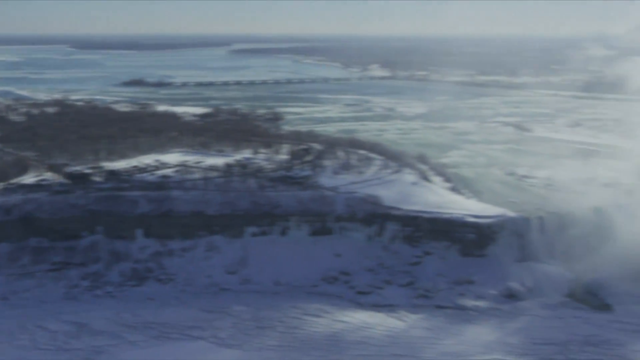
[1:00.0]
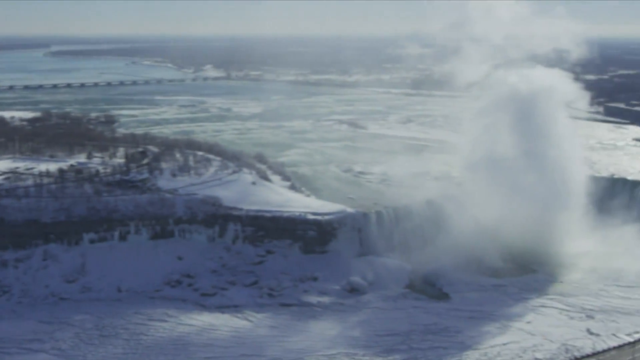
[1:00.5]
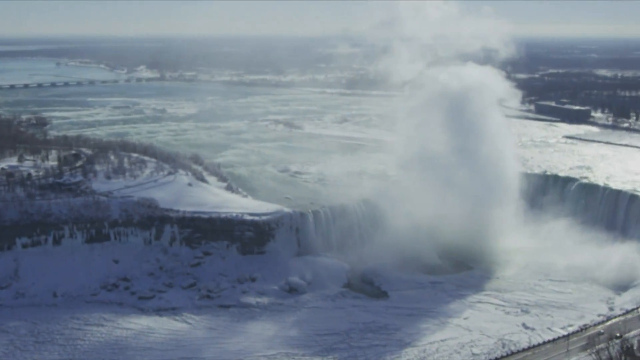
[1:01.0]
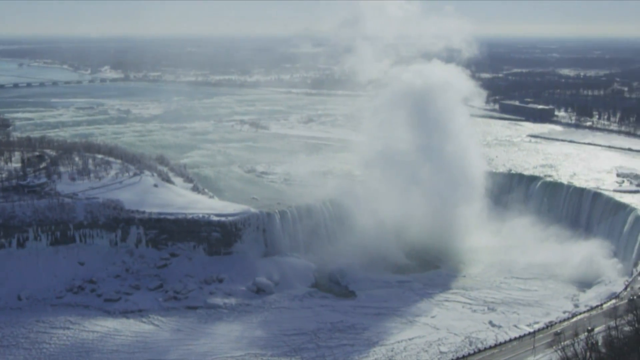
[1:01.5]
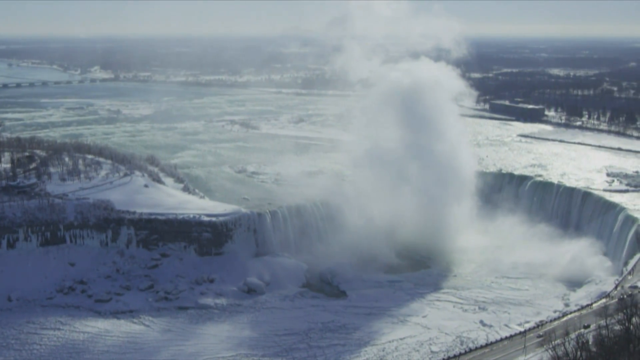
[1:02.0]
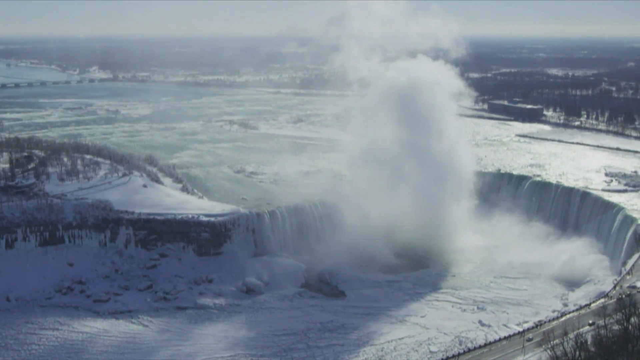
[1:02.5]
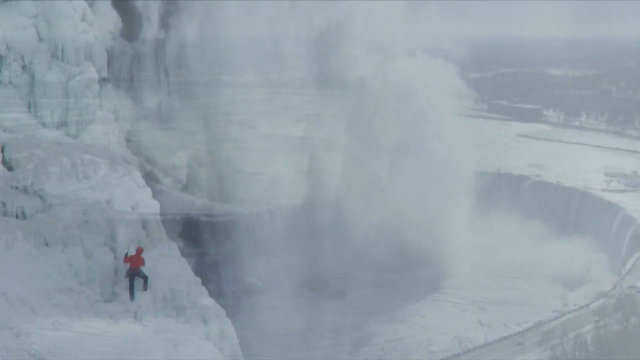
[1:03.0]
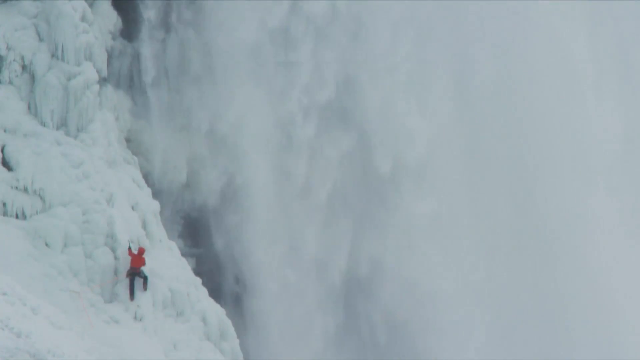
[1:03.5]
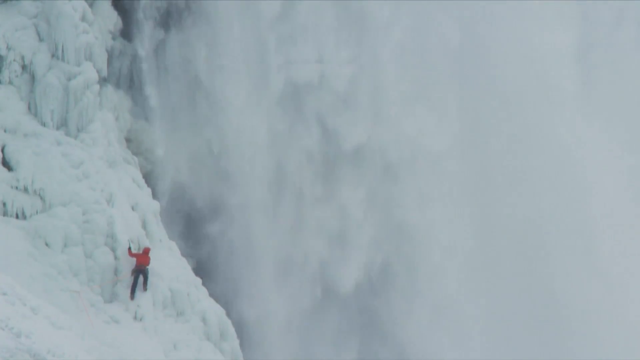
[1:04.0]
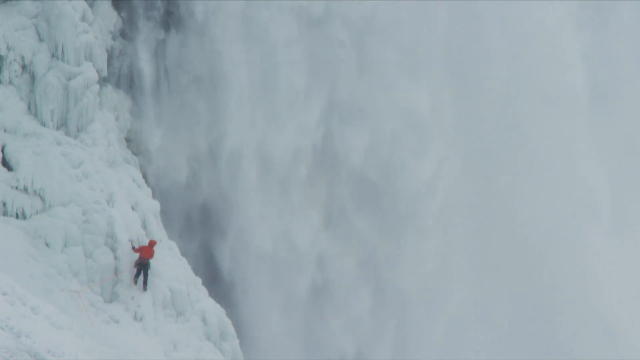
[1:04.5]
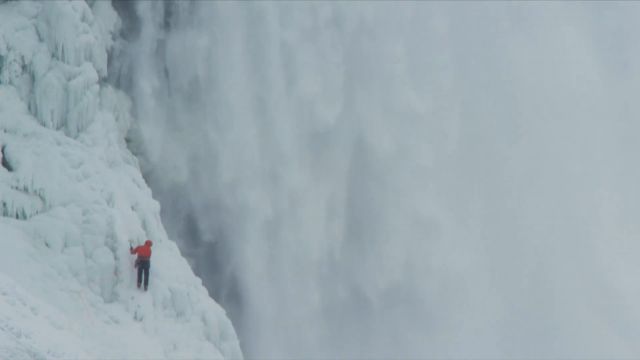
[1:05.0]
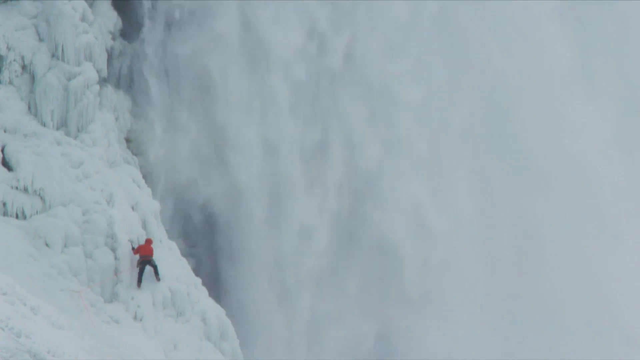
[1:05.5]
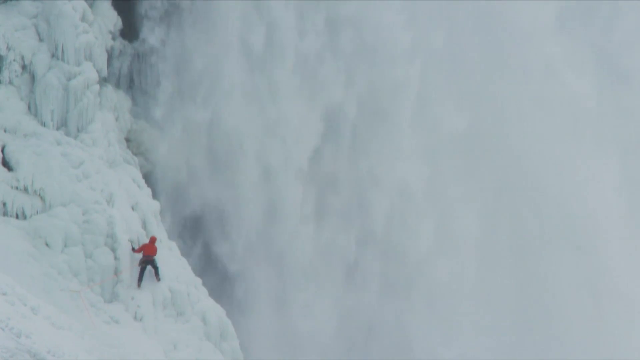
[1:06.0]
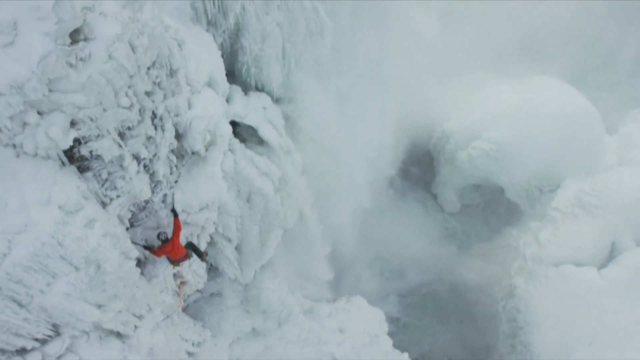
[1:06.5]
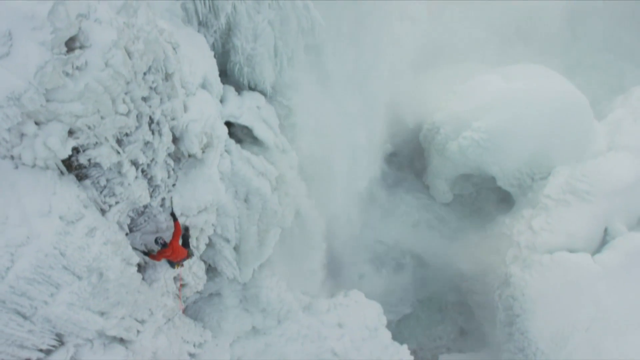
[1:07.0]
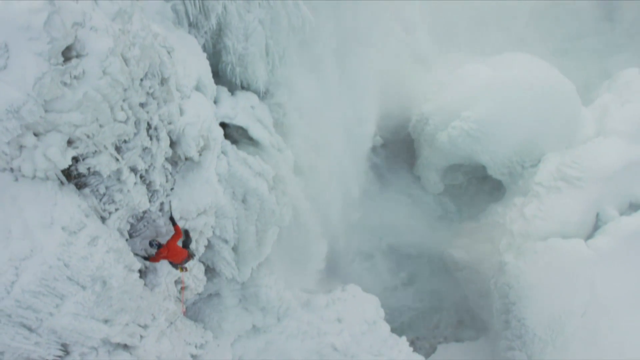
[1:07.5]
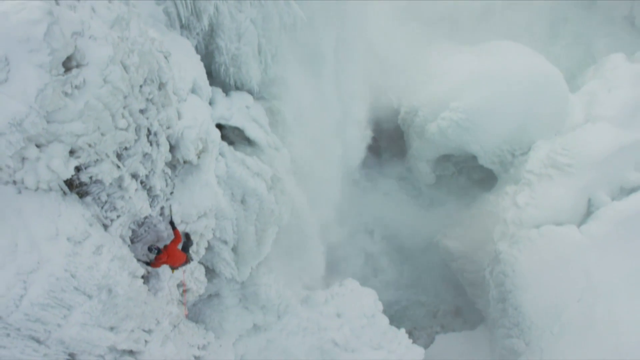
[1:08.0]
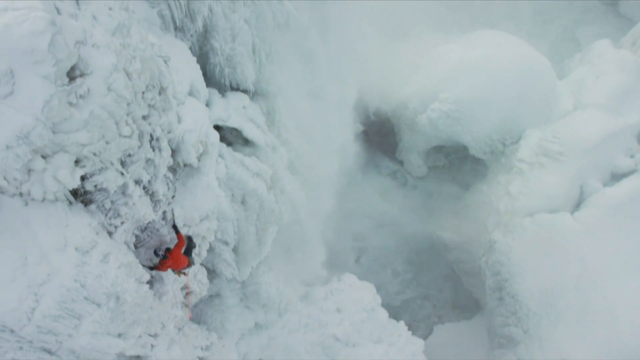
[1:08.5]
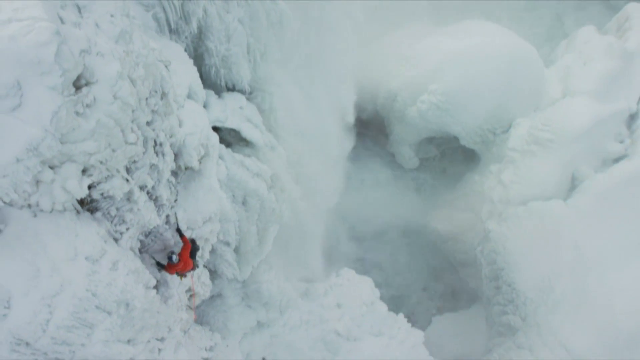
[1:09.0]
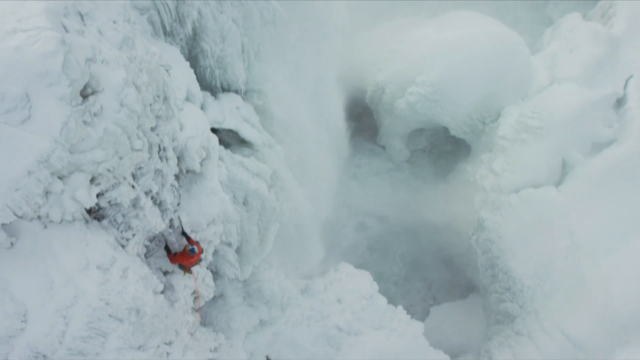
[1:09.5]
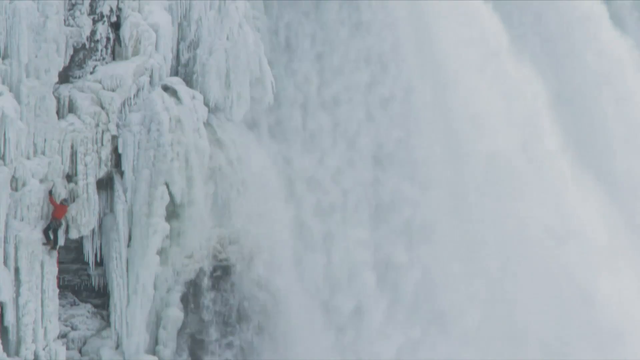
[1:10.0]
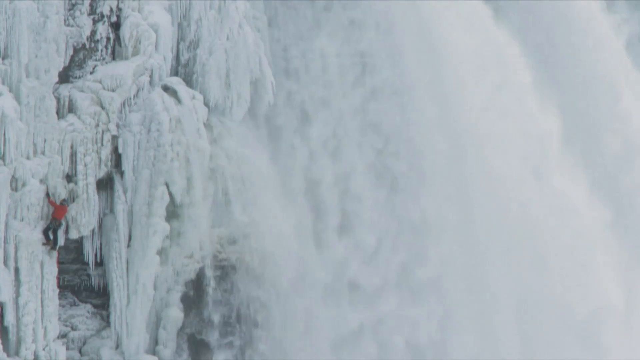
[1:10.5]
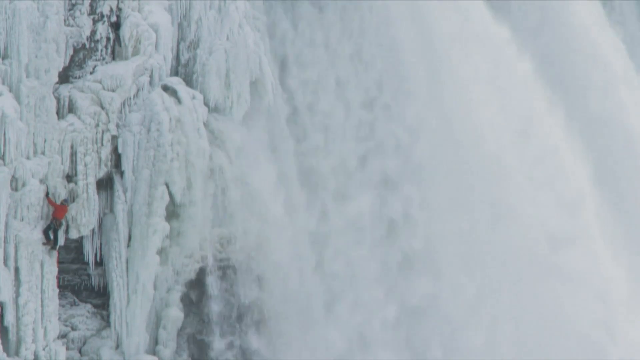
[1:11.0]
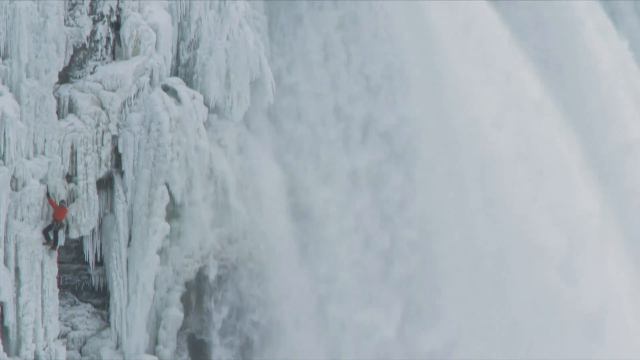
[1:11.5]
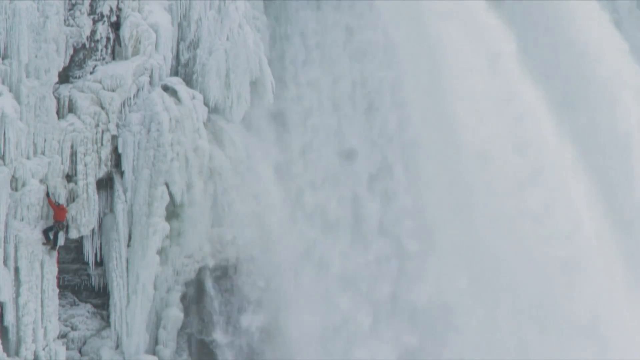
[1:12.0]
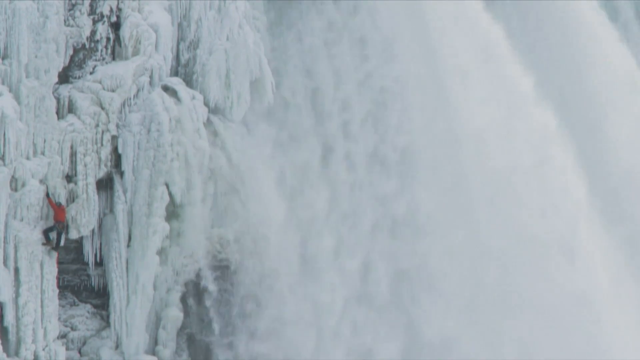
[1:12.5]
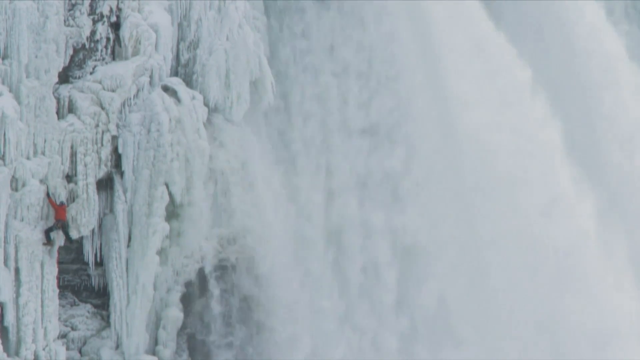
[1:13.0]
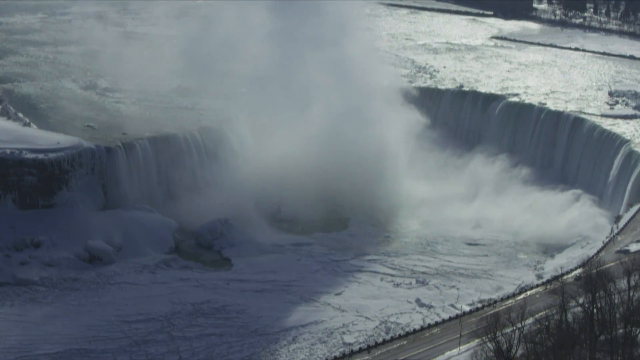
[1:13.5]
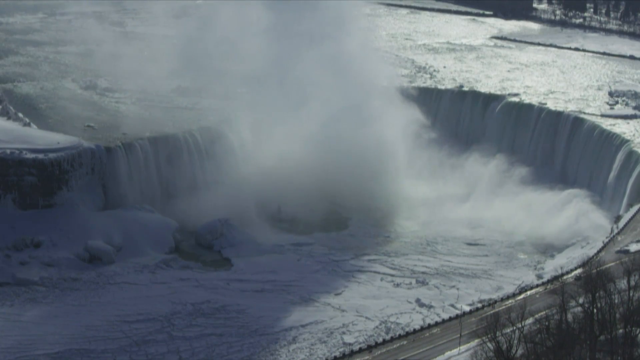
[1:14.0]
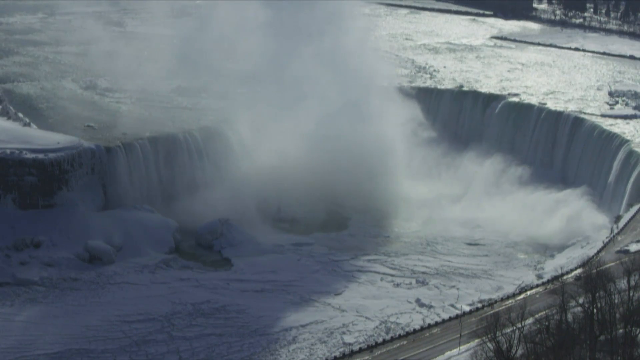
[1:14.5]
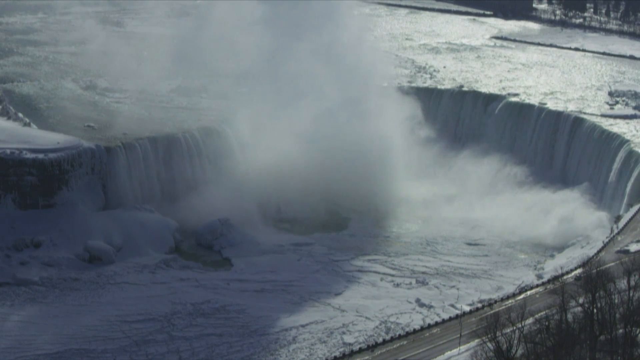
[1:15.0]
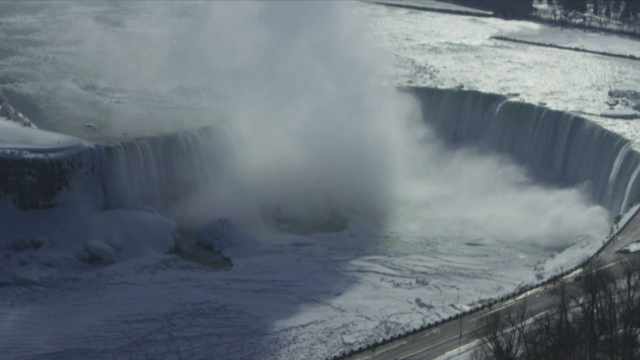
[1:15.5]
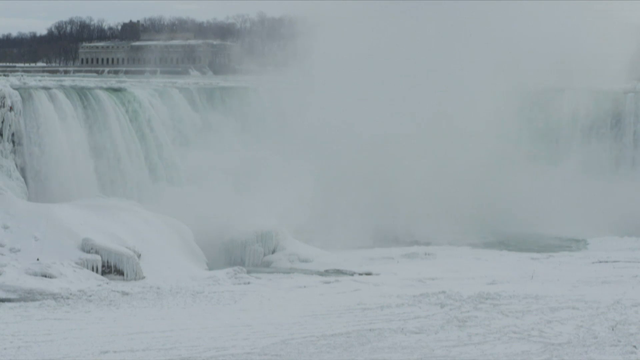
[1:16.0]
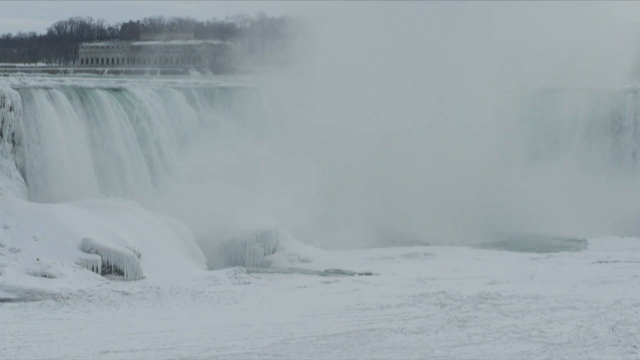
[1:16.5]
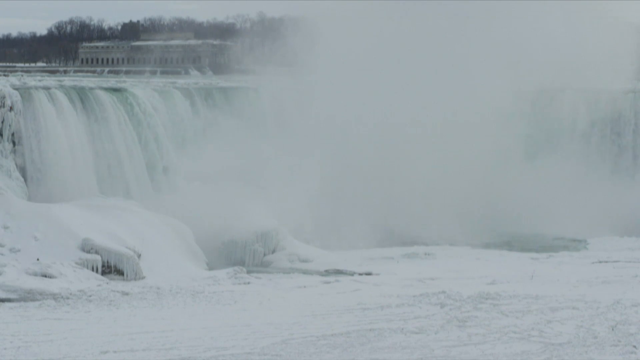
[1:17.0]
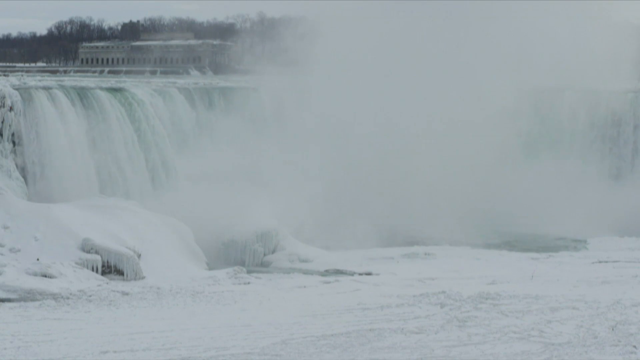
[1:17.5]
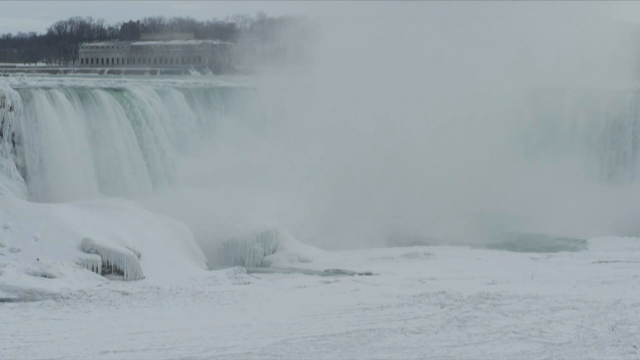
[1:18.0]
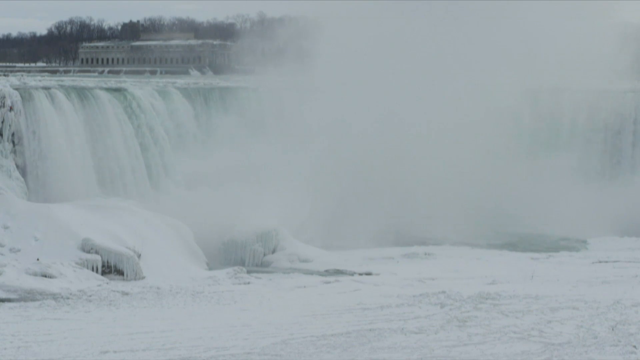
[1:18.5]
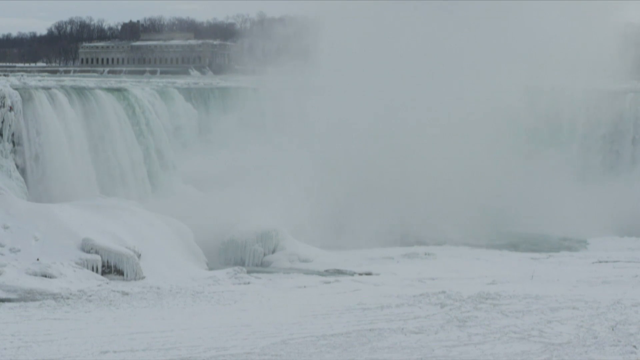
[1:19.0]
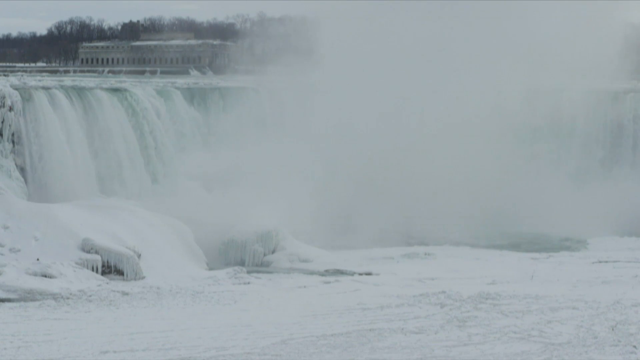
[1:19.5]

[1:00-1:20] The view pans to the right, and a large, sort of columnar, vertical cloud seems to rise from where the falls go down, a rising steam-like area. Another scene shows the man in his red jacket climbing up on the left. He seems very small compared to the large falls. He goes up carefully, using his knees to climb and holding a pickaxe-like tool as he raises himself up. A view from above, apparently from an aircraft or drone, shows the distinct horseshoe shape of some of the falls. Another image, from further back, shows the falls coming down, with steam filling most of the screen. A gray building at the top left is partially obscured by steam. Many deciduous trees with no leaves at all are visible behind, along with some evergreen trees. The water is not seen falling through in the foreground toward the left.